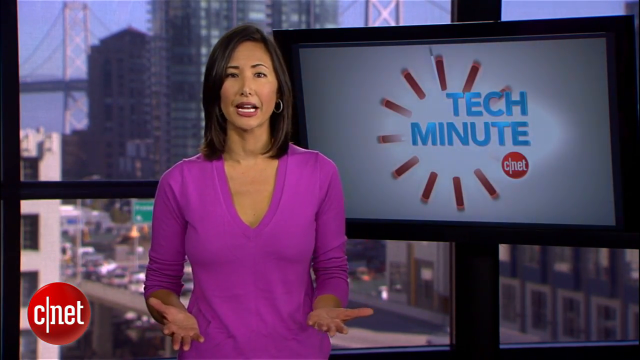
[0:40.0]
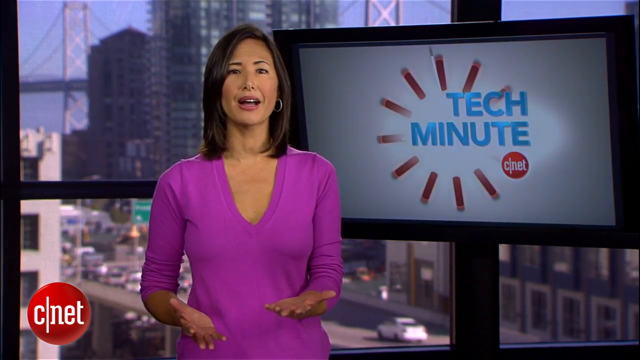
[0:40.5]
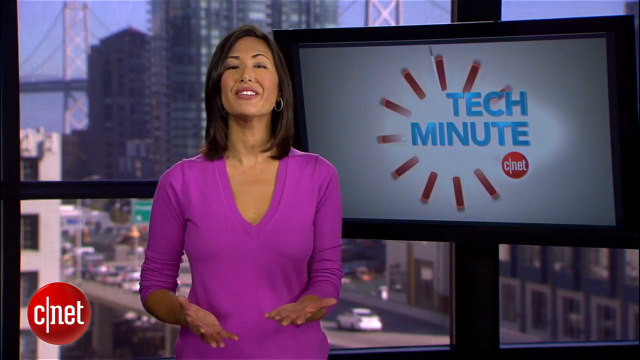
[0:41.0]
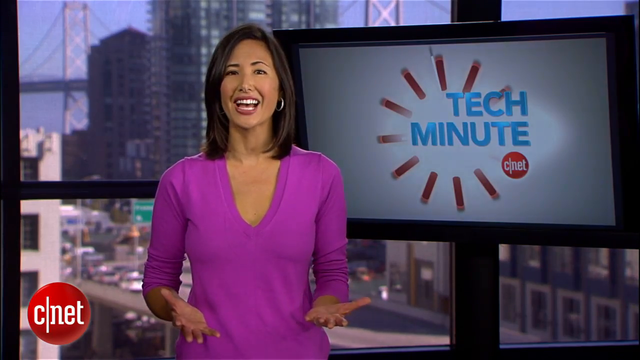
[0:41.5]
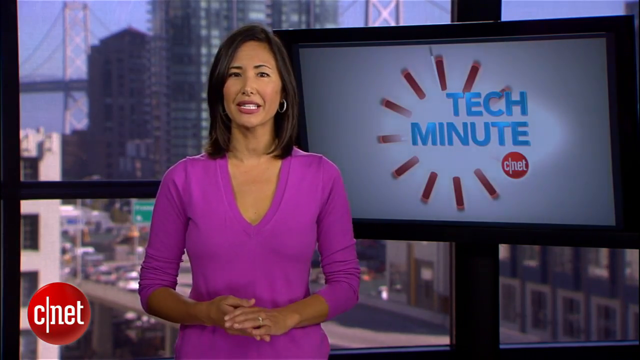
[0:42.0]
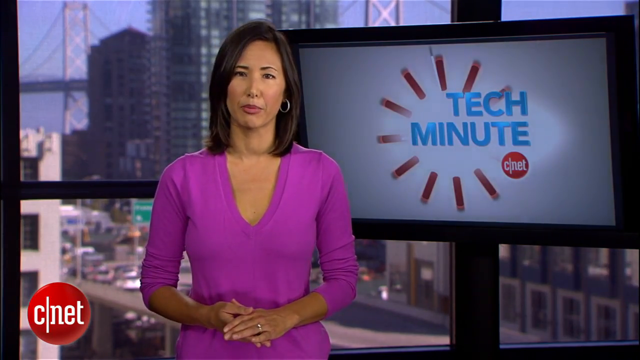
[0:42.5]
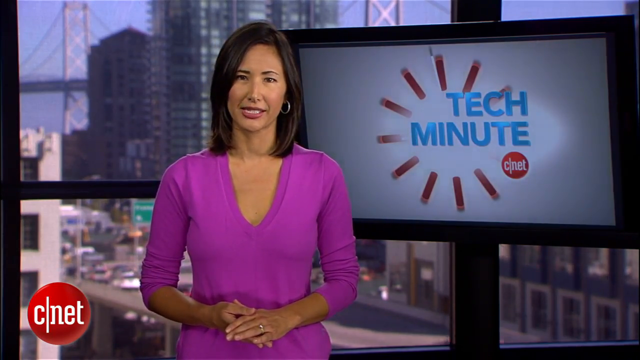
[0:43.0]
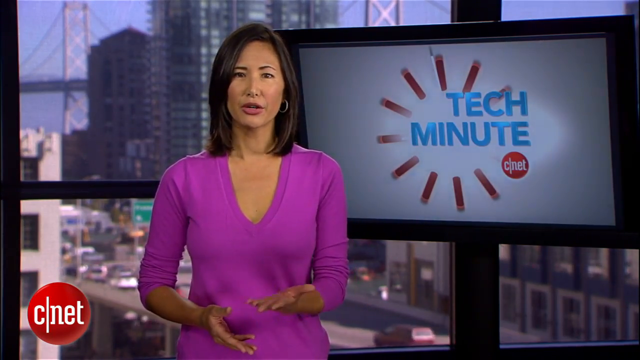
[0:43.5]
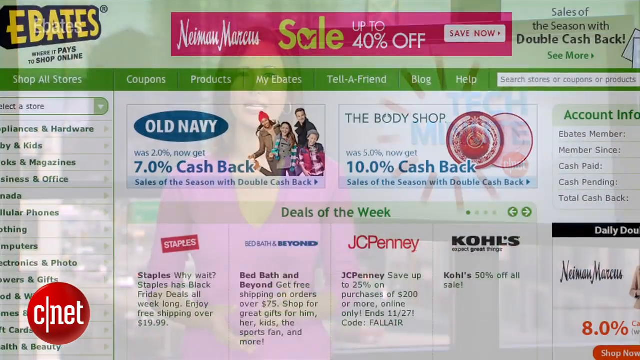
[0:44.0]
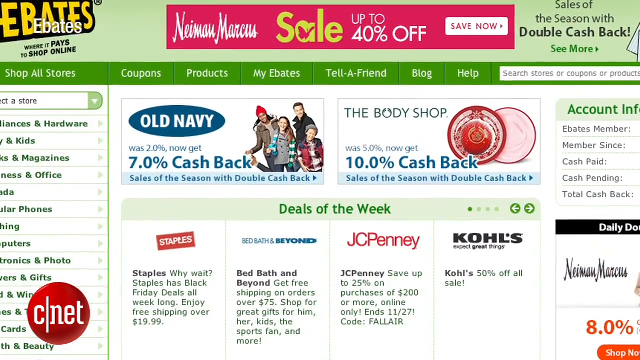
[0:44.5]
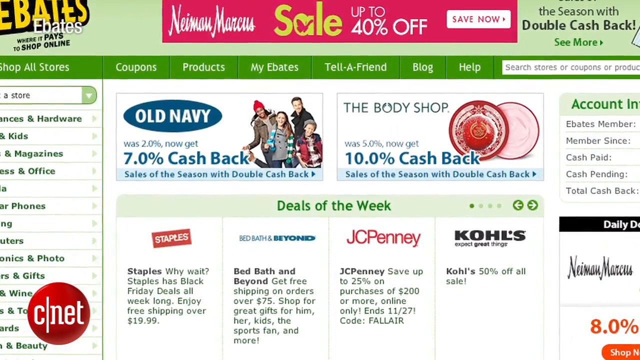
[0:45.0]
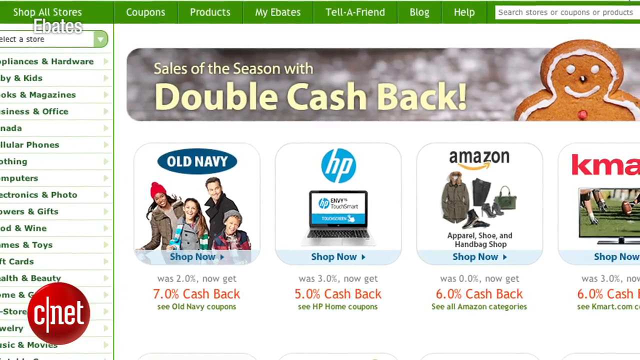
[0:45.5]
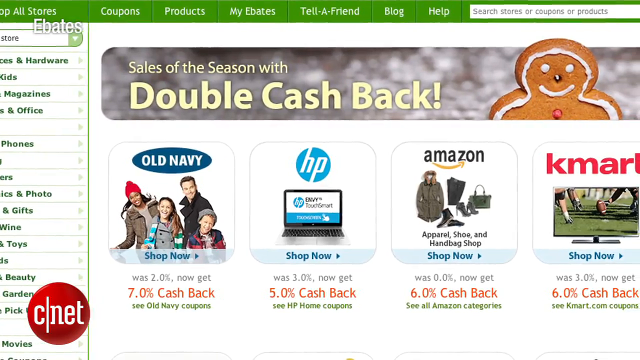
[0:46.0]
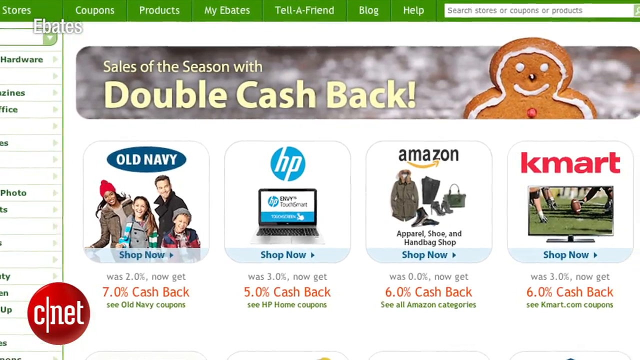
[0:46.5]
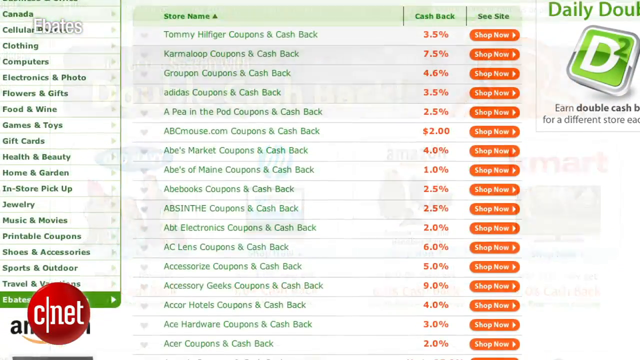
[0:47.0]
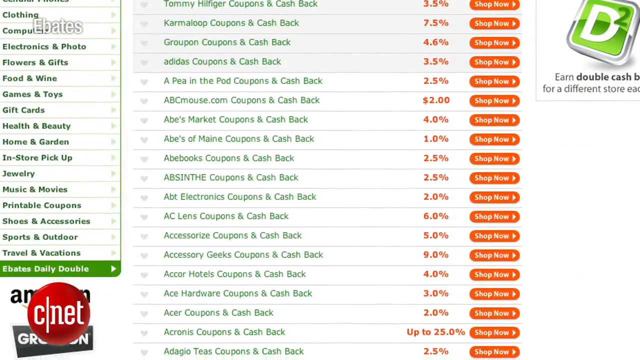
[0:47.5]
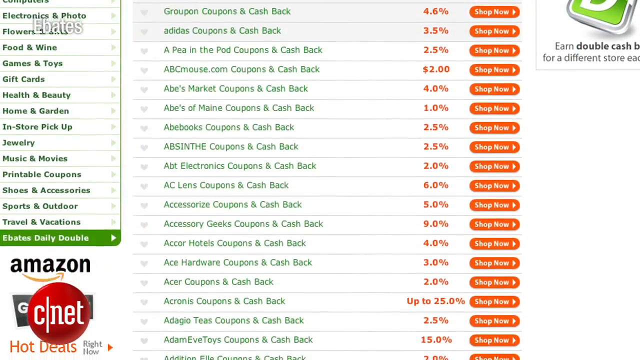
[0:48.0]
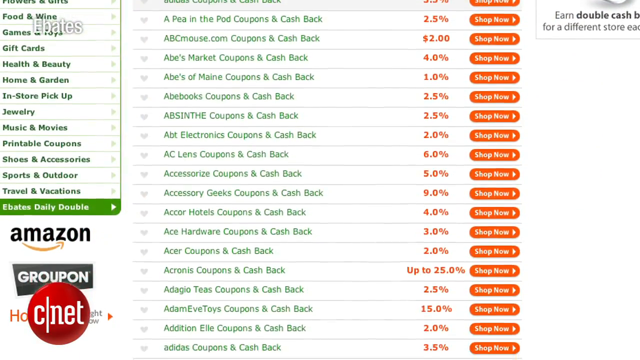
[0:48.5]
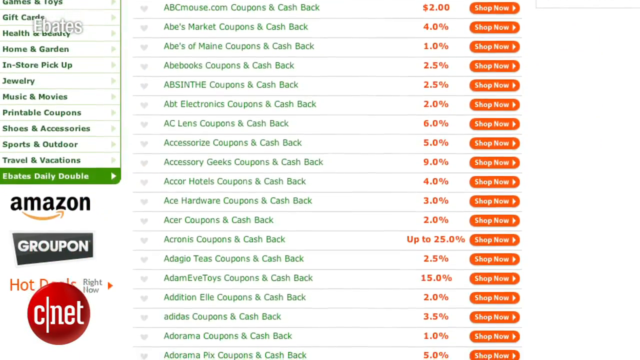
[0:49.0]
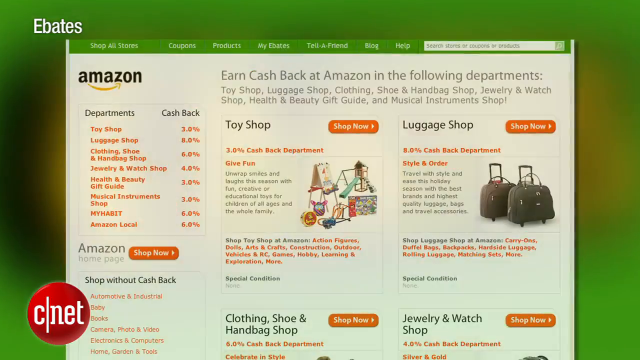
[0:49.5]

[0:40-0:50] Kaira Suboy shows deals and coupons from Amazon and various other websites for Cyber Monday, including double cash back and percentages off regular purchases. She is very expressive as she reports. The backdrop shows San Francisco; it is unclear whether she is live there or whether it is a picture or television screens, though she possibly is actually in San Francisco overlooking the street.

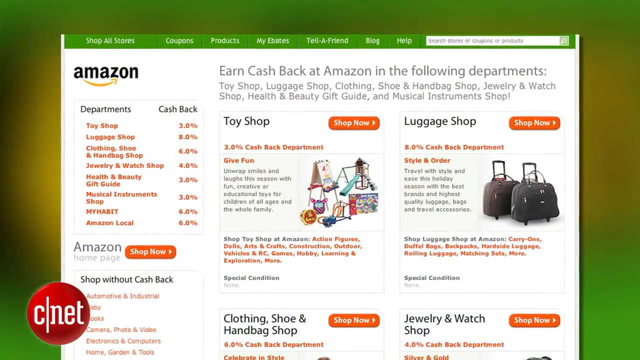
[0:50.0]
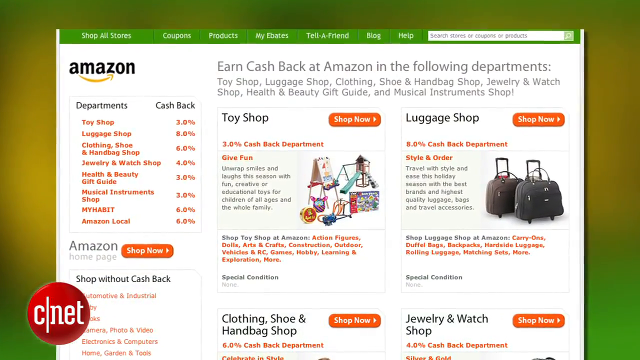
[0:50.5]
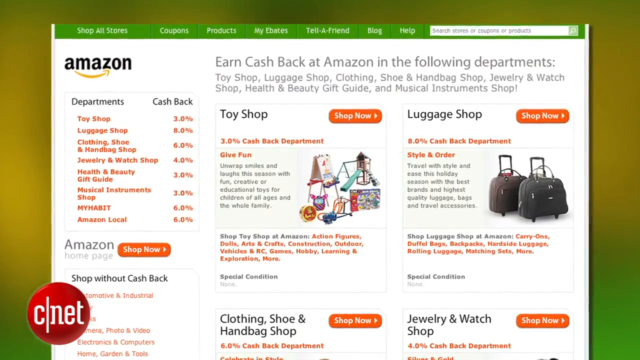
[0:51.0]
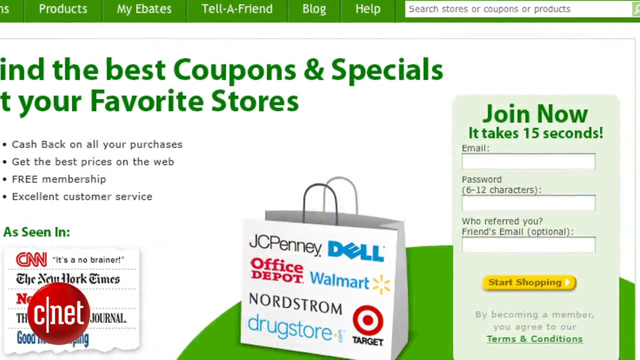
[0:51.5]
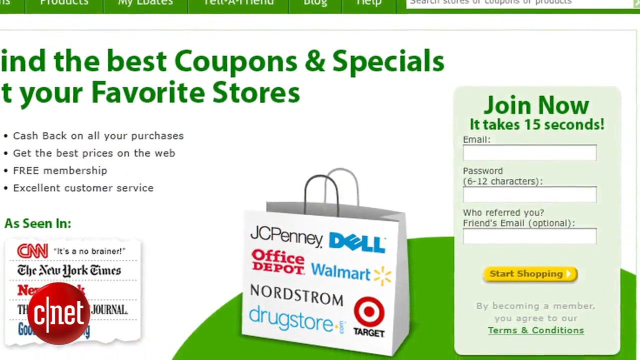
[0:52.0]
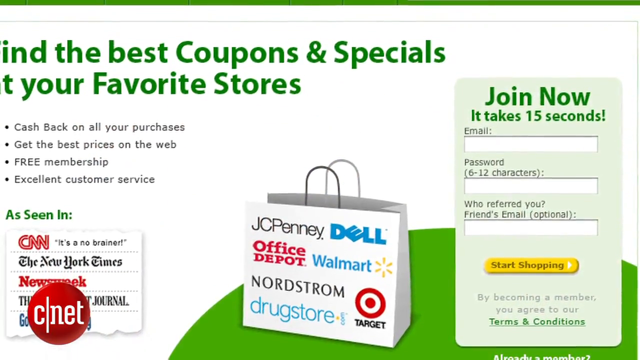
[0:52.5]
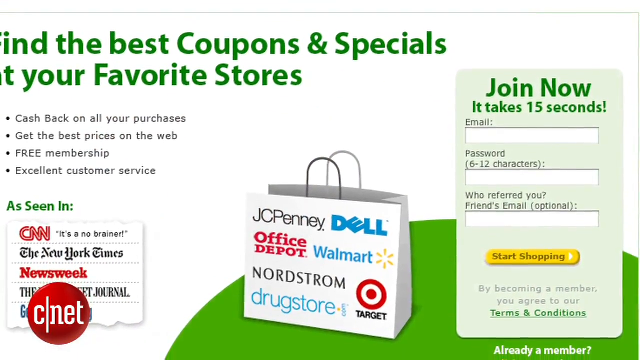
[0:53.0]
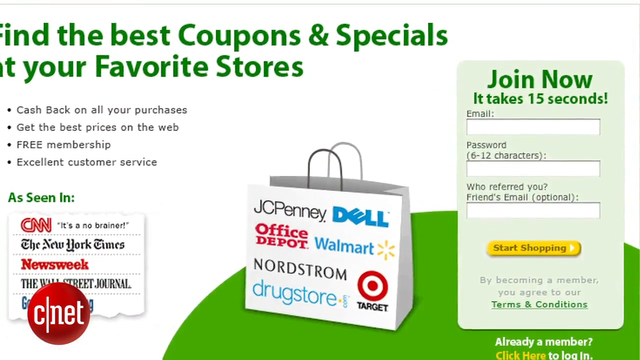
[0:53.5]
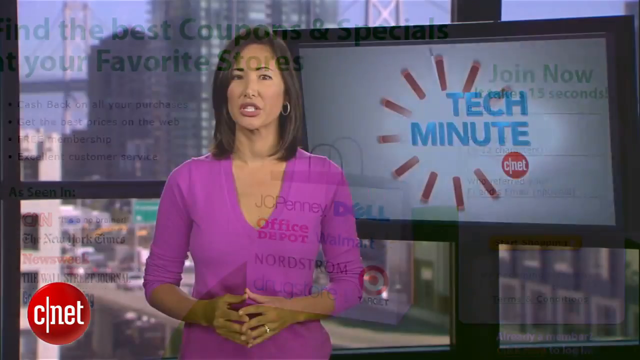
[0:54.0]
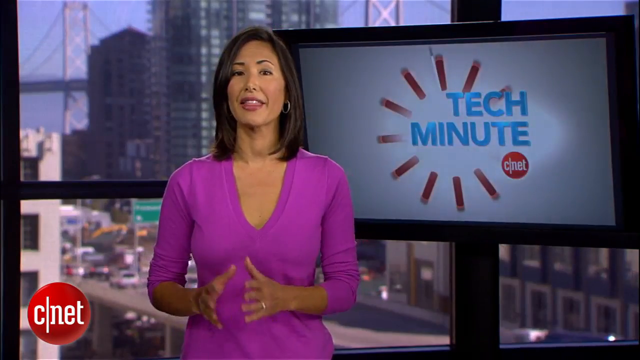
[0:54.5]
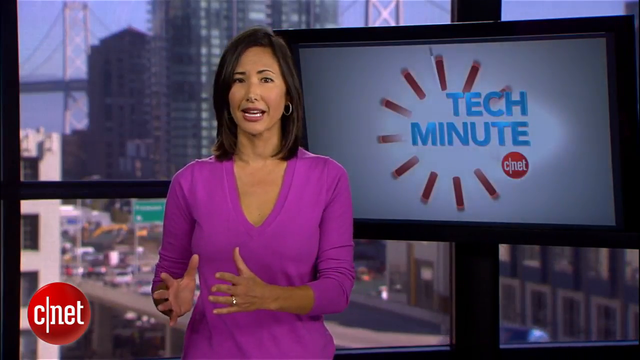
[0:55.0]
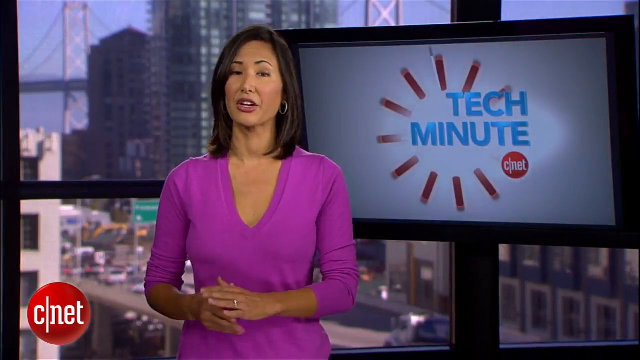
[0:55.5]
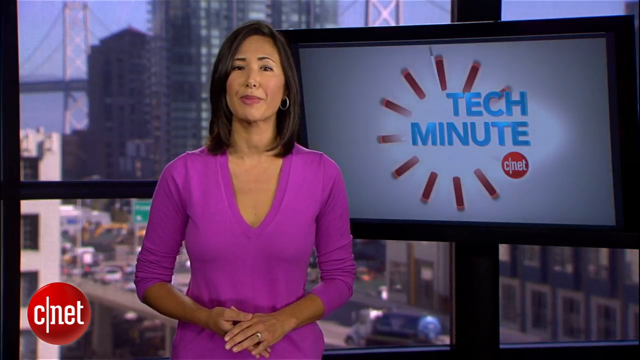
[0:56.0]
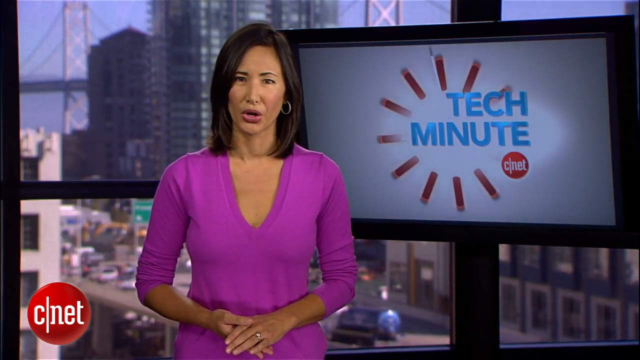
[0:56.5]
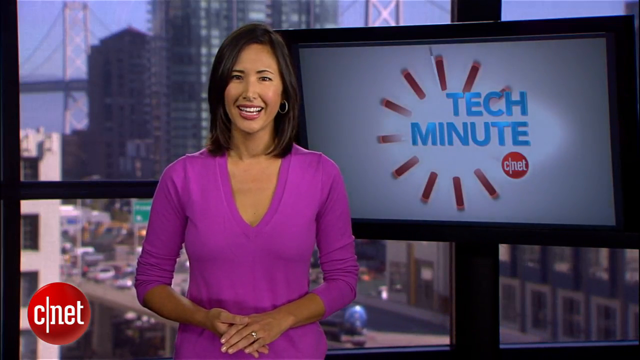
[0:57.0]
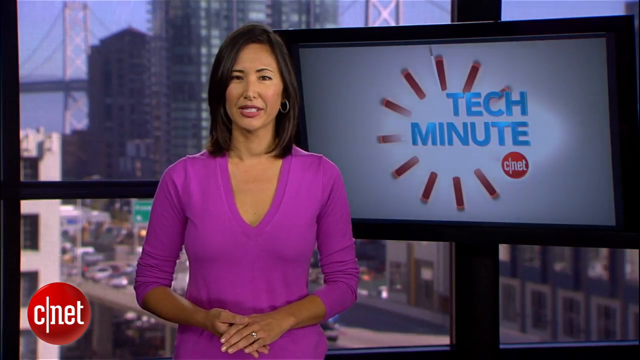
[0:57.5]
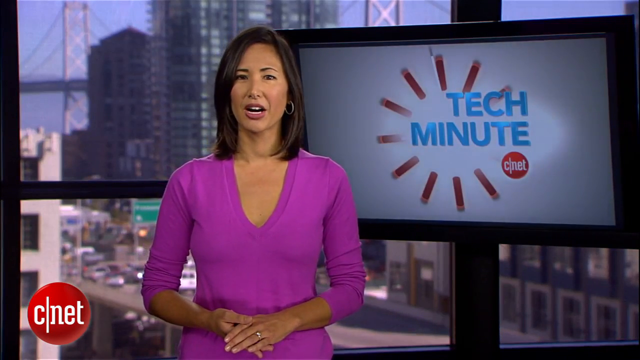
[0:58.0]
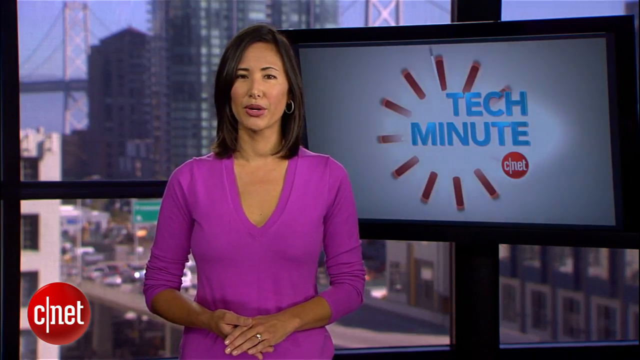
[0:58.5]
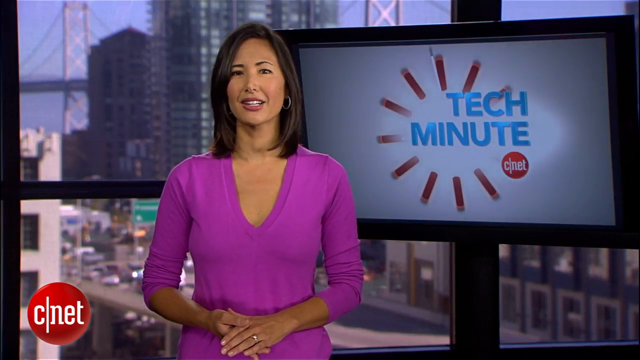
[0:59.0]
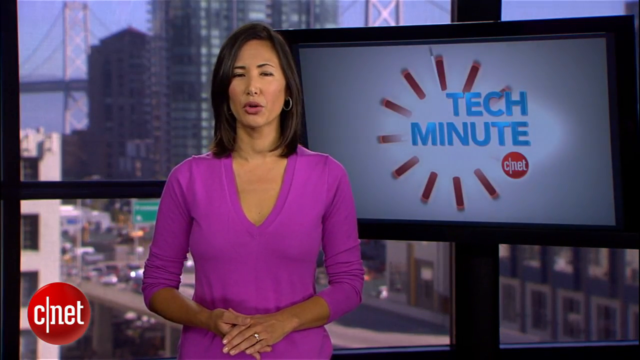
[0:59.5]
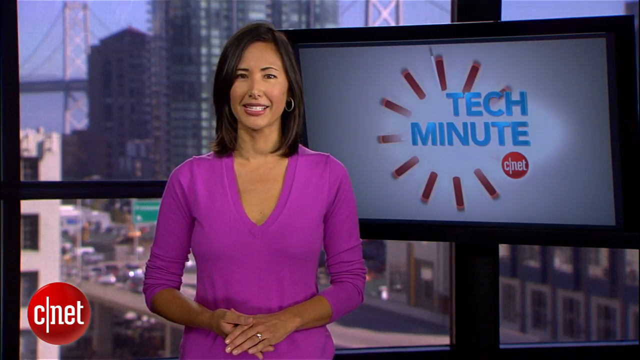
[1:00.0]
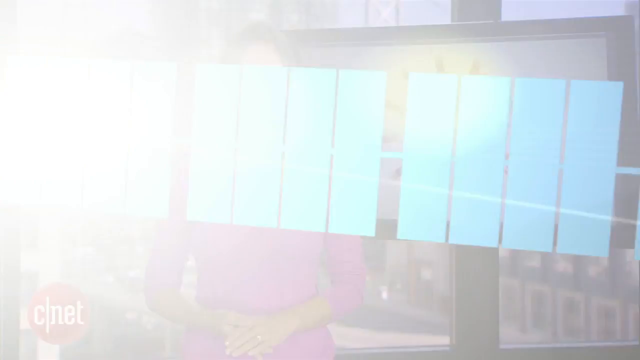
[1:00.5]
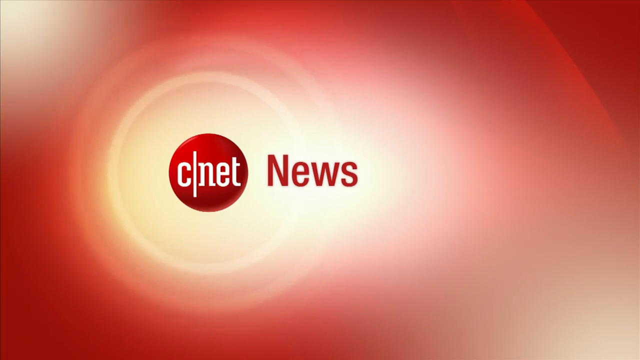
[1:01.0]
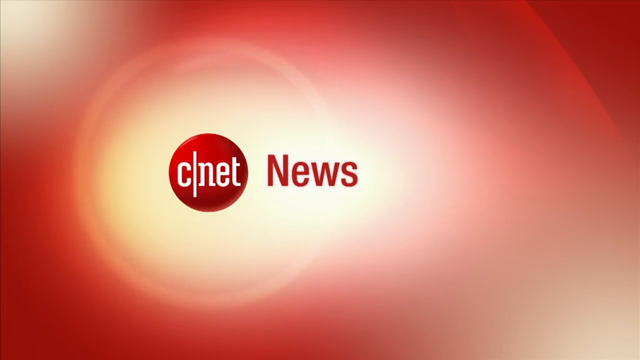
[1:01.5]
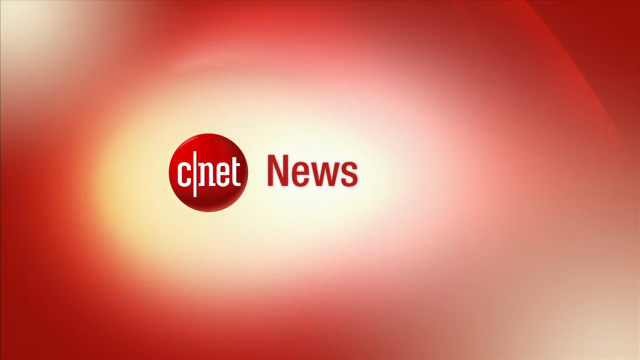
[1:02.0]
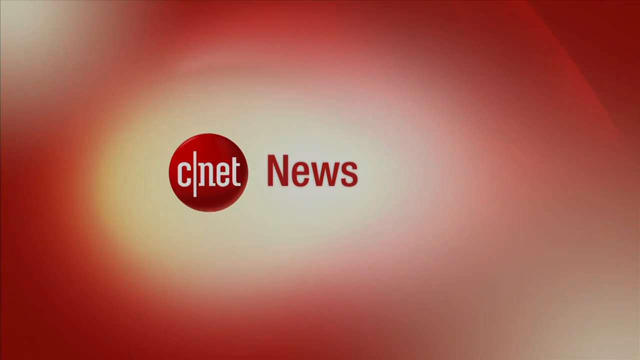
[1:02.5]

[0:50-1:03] JCPenney sales are shown, and the reporter continues her report up until the very end, when the screen goes black.